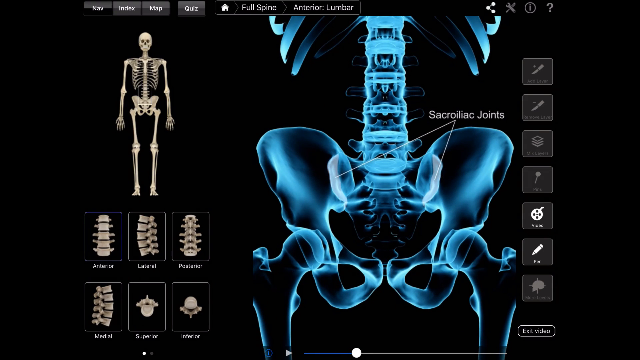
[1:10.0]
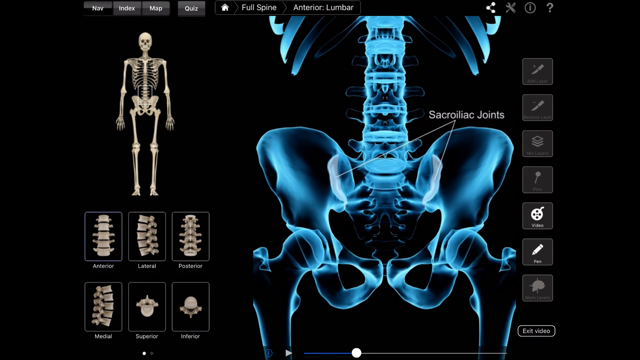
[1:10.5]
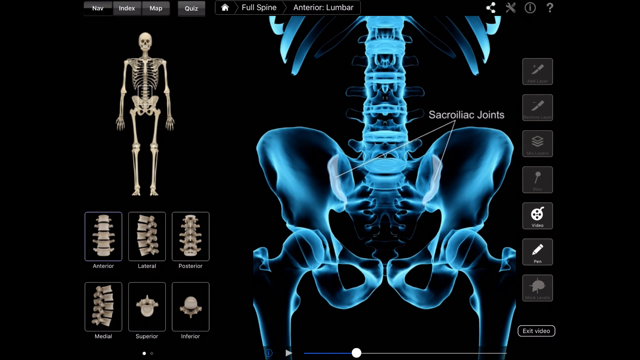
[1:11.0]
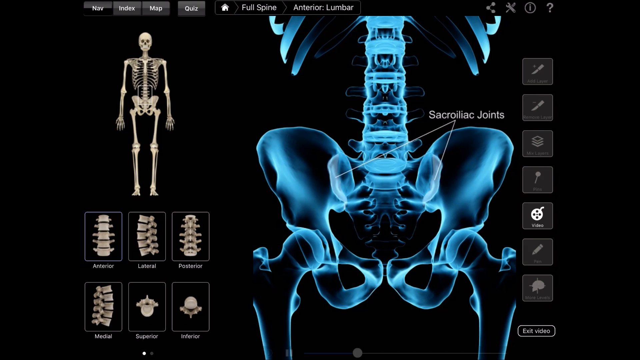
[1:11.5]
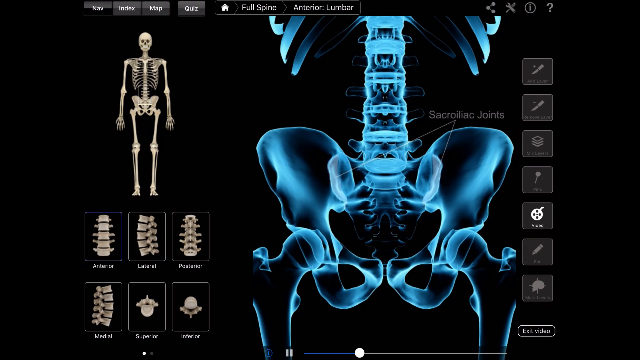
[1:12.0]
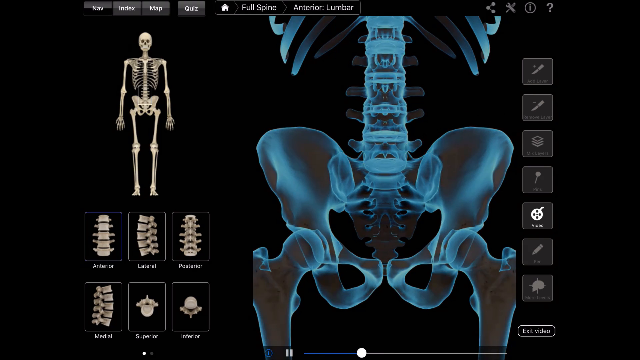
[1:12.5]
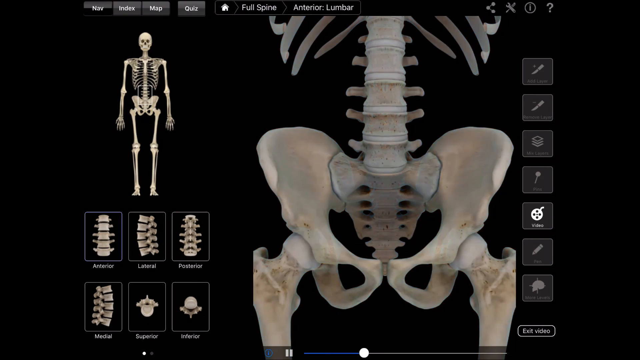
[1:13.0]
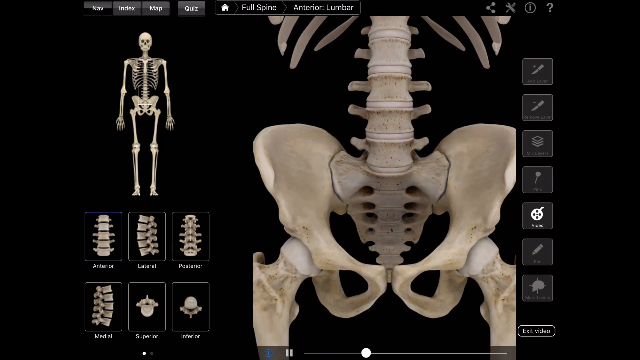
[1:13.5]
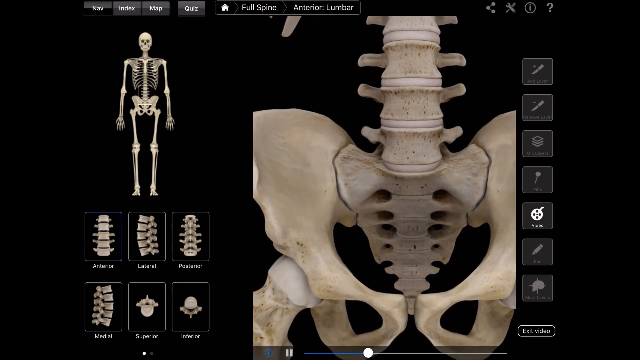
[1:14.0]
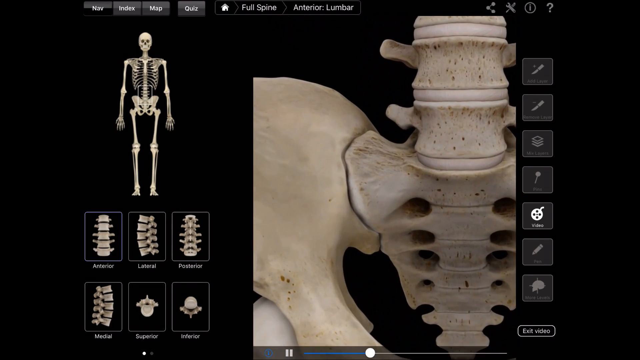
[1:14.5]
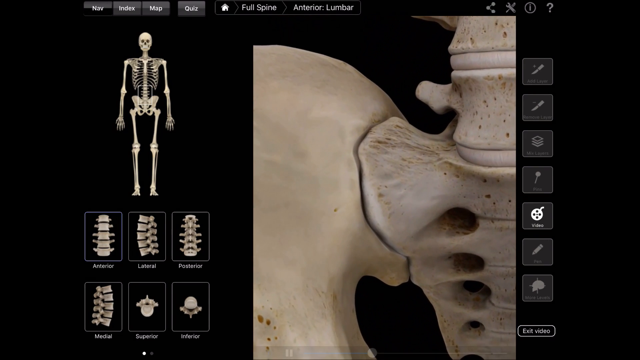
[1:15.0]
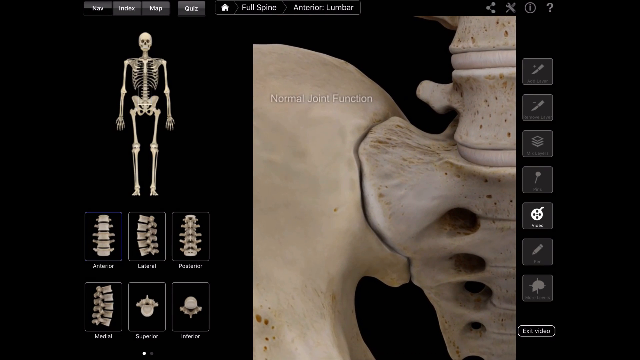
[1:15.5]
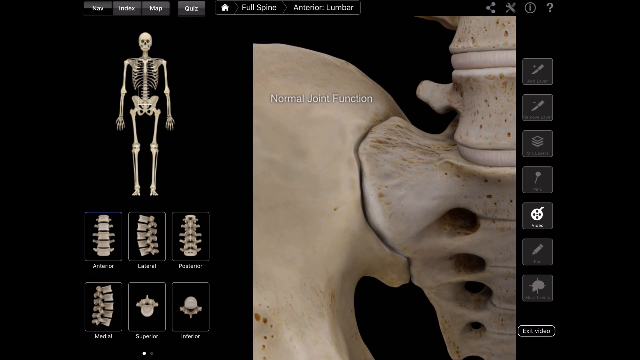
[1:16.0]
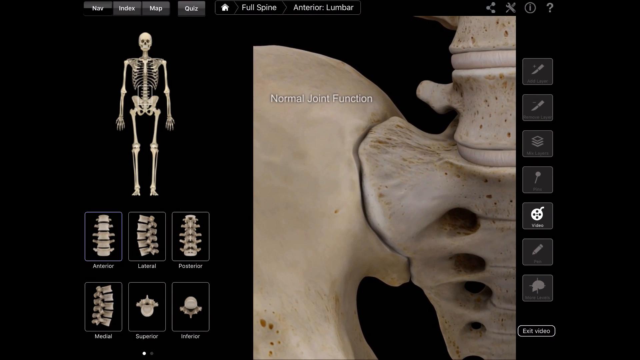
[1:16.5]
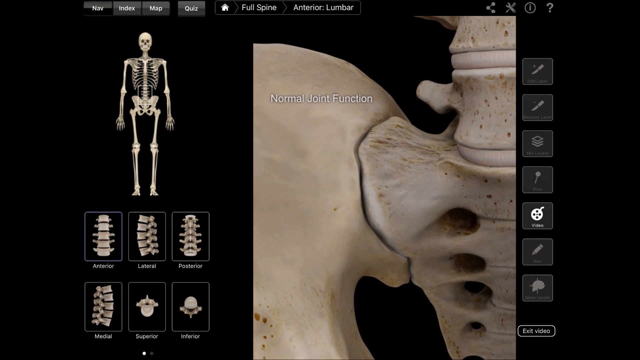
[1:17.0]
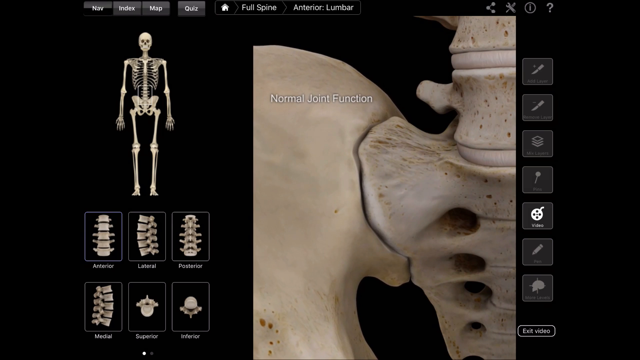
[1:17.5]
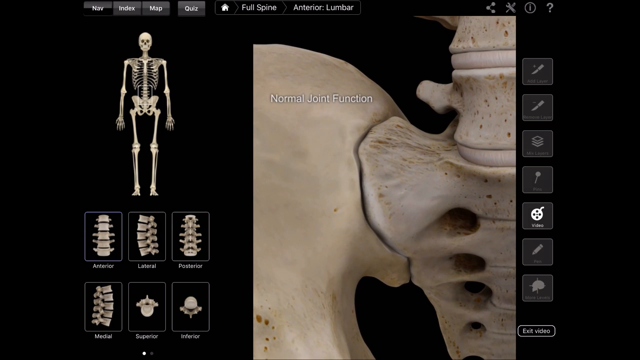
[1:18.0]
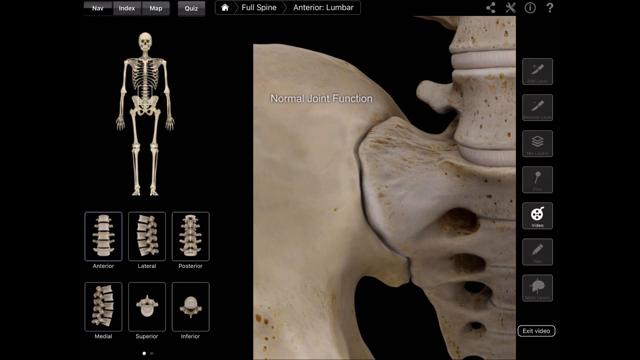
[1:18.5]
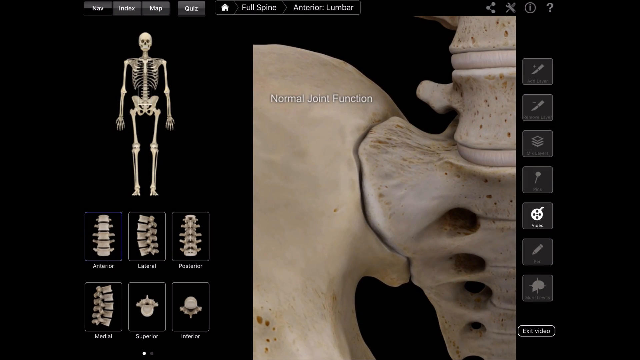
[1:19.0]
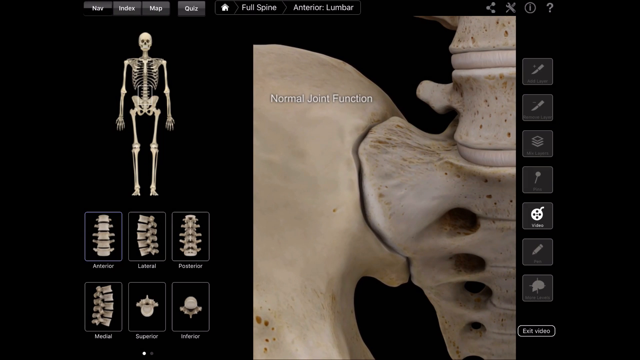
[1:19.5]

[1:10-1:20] The sacroiliac joints remain highlighted in the zoomed-out x-ray view, looking small compared to the entire hip bone and smaller than in the earlier, more zoomed-in bone view. The view then switches back to the skeletal bone view, not the x-ray, and zooms in on the sacroiliac joints. Normal joint function is demonstrated, with the leg or bone moving fairly freely.